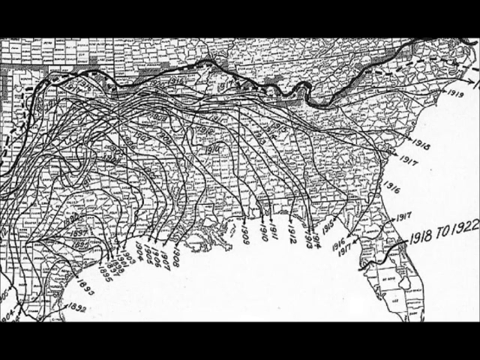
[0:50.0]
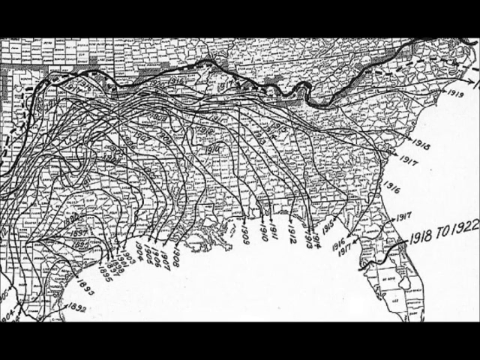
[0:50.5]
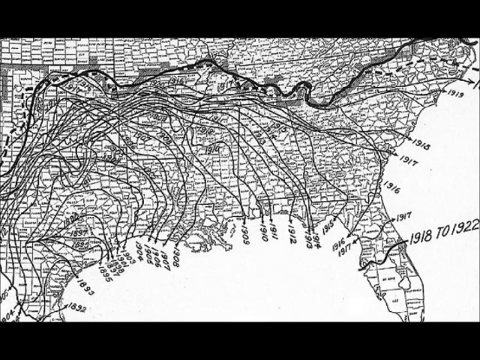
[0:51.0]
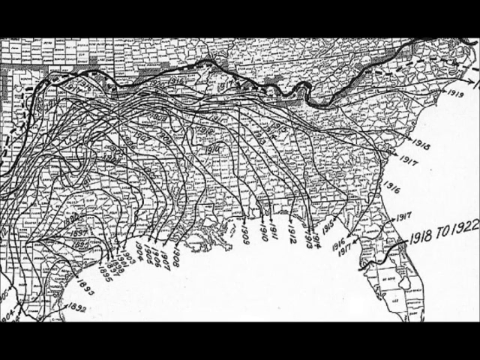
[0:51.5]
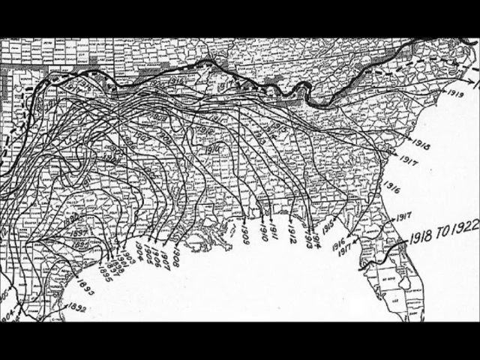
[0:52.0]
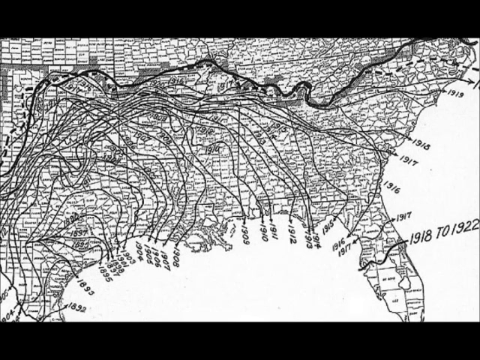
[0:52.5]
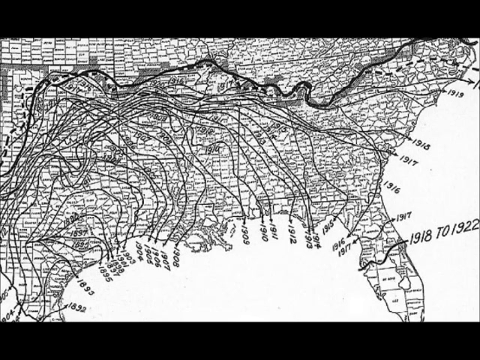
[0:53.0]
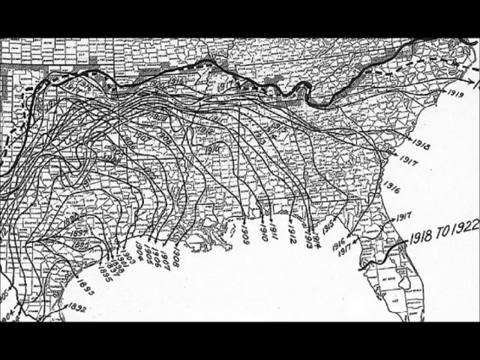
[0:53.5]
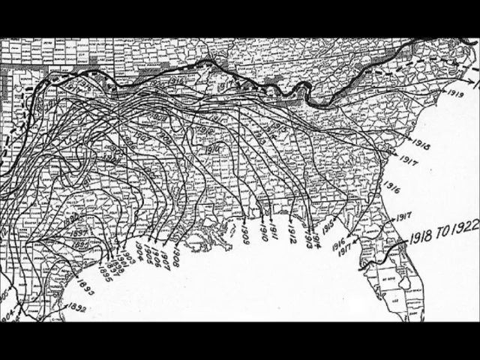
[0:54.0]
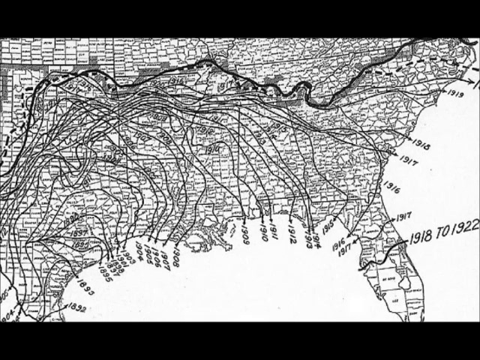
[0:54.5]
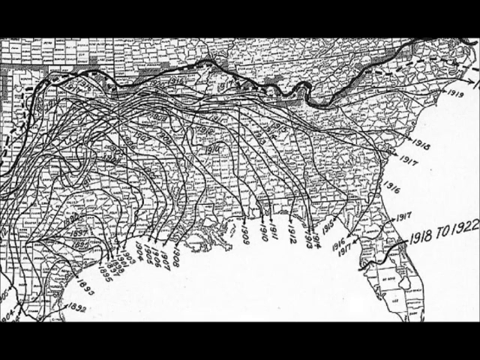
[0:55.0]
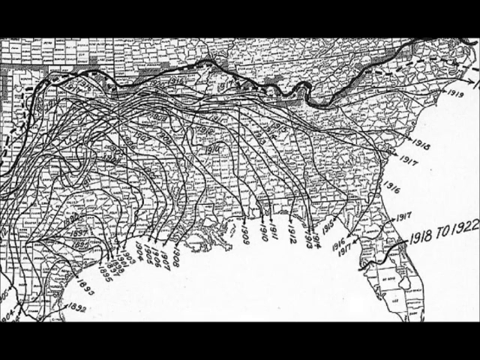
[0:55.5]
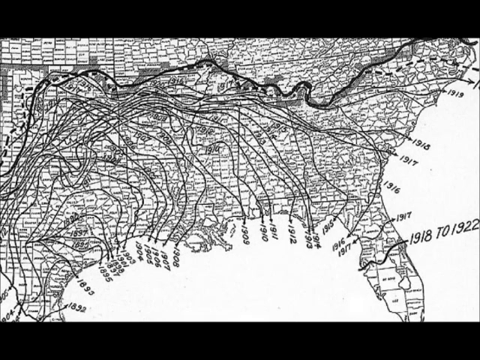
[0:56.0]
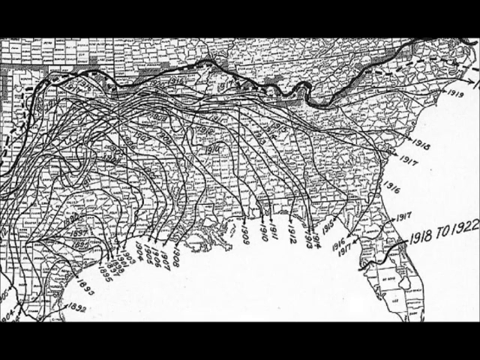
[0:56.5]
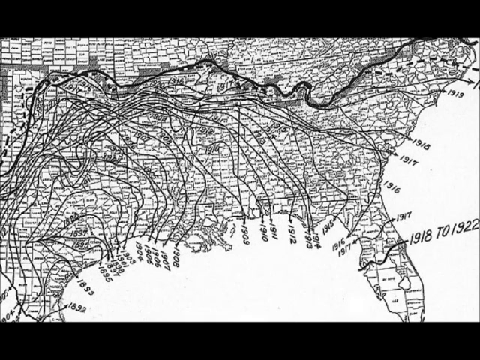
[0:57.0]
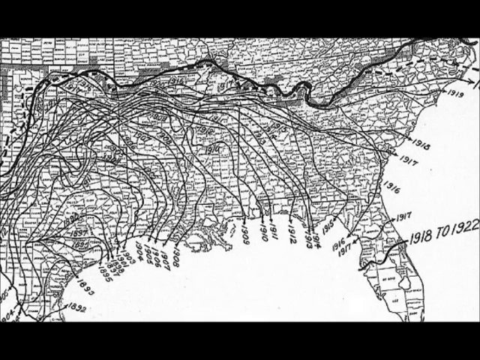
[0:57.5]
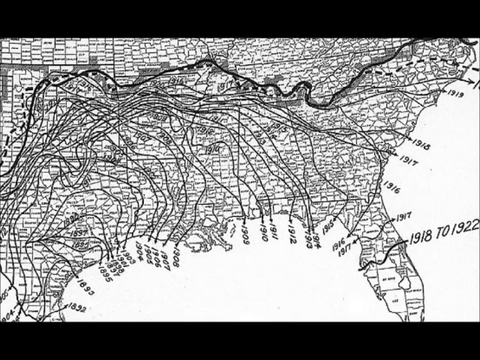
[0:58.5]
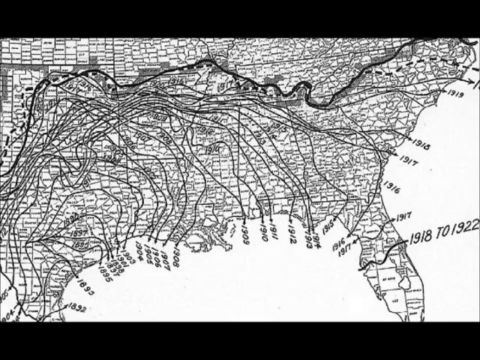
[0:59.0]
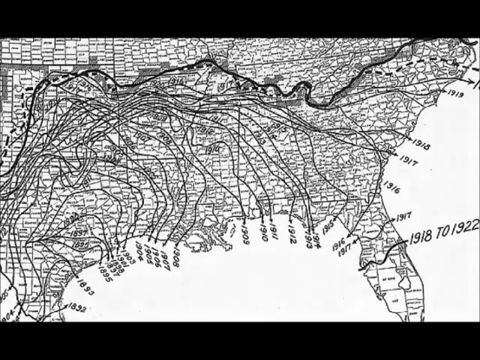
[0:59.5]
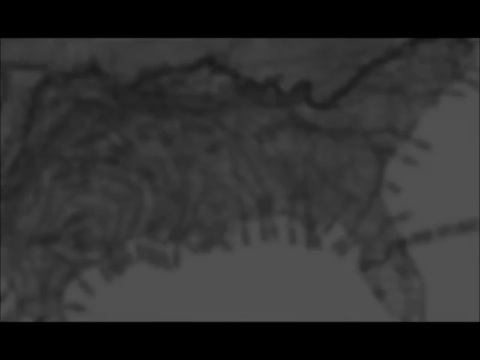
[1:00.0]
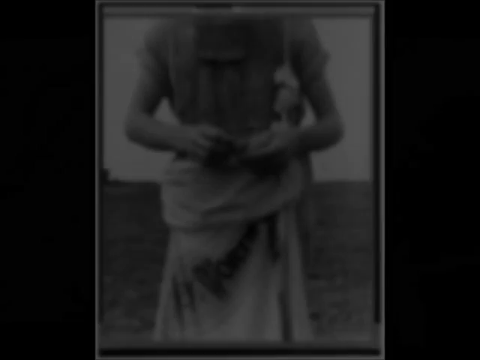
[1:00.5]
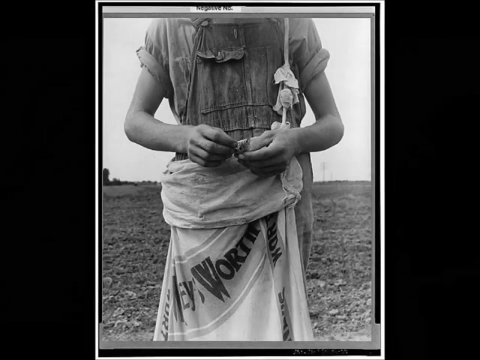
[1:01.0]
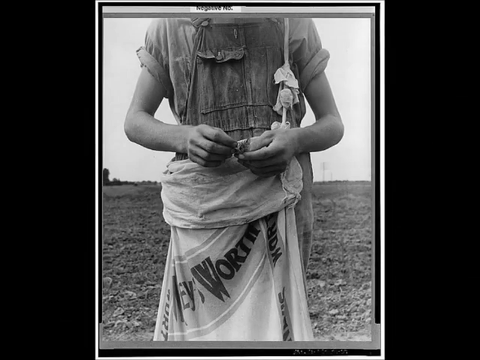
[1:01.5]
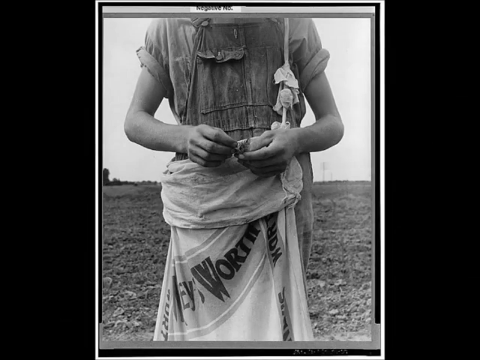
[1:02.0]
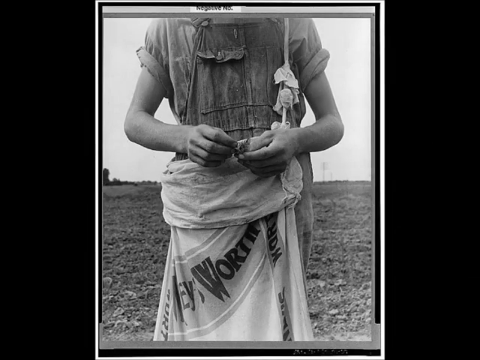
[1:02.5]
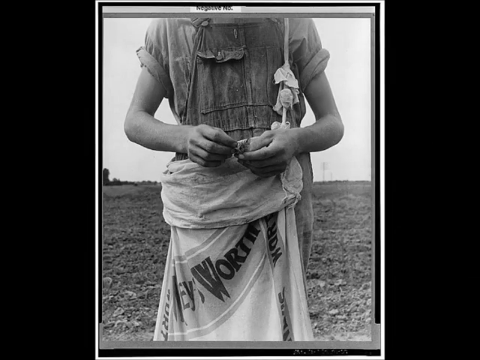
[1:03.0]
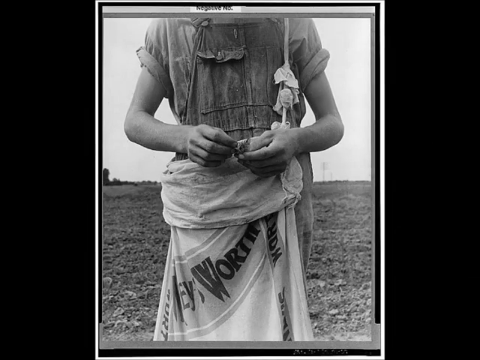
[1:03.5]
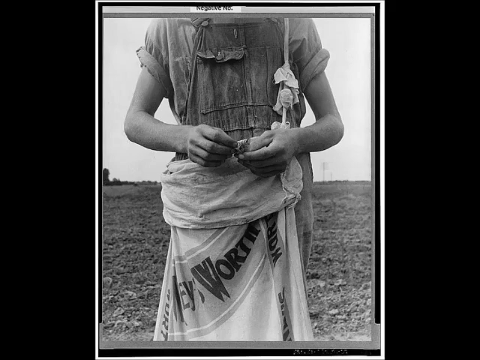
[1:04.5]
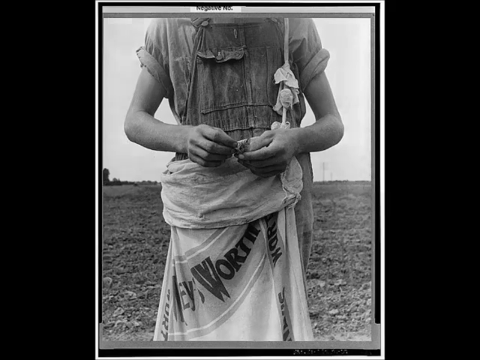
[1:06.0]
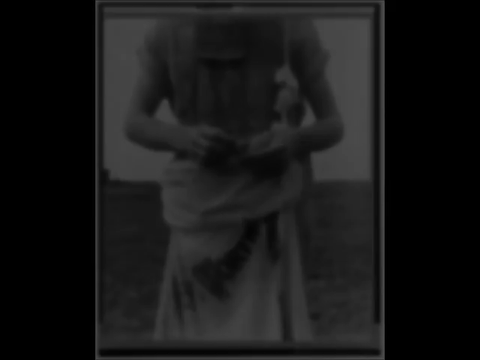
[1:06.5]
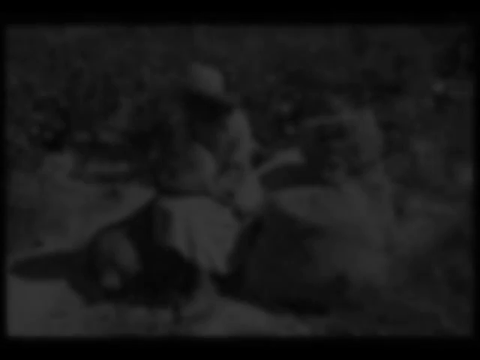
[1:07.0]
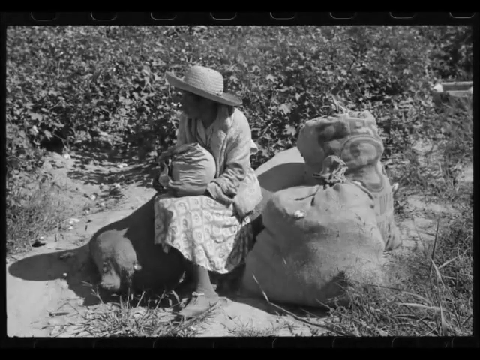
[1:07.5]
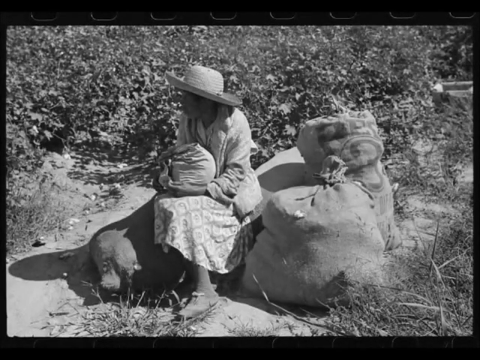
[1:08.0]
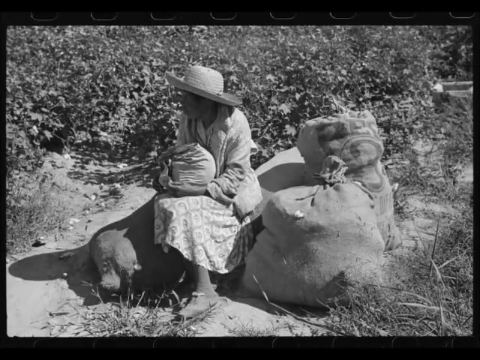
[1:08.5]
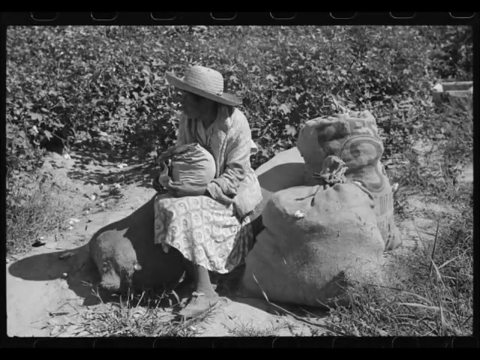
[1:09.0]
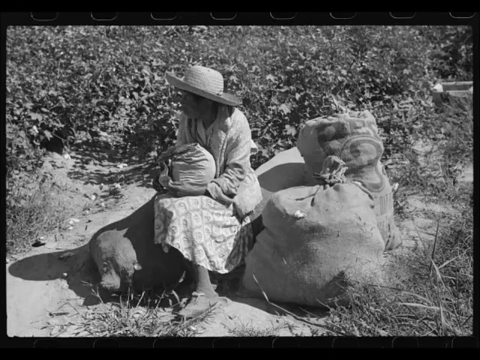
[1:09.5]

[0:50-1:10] The map is zoomed in on the South, and the landmasses are hard to make out because so many lines run over it. One dark line comes in just above West Virginia, goes down the under edge, comes up, cuts through Tennessee, passes above Oklahoma and a little through Kansas, and cuts down on the upper corner of Texas. More lines run underneath it, and where they come down into the Gulf of Mexico, years are scattered all the way across. Up the east coast from Florida to West Virginia are five more numbers. The landmass is dark and kind of colored in, and it looks like it has some letters on it, but they are hard to see. The video cuts to a black and white image of a person, with a black border on the right and left and a white, then black, border around the outside. The person wears overalls and a T-shirt with rolled-up sleeves, and their head is cut off at the top. A sack is around their shoulders, coming down to about their waist. Their elbows are bent at their sides with their hands in front of them. A field and a white sky are behind them. There is lettering on the bag that looks like it says "worth." The video then cuts to a black and white photo of a woman or person sitting on some big sacks, with one sack to the left and two to the right and lush greenery behind. She wears a brown hat and a white dress, has a bag in her lap, and faces to the left.